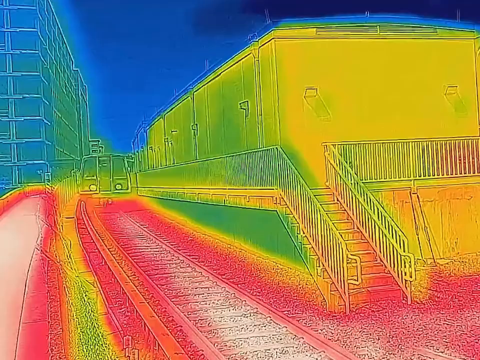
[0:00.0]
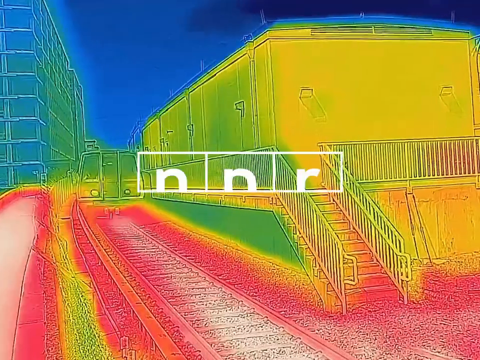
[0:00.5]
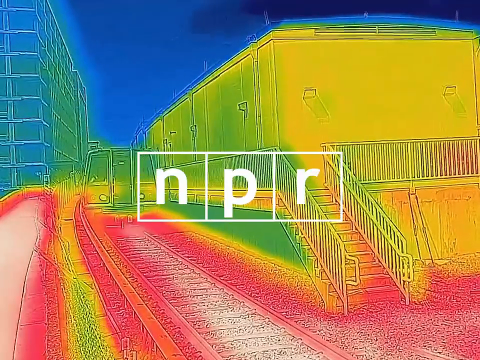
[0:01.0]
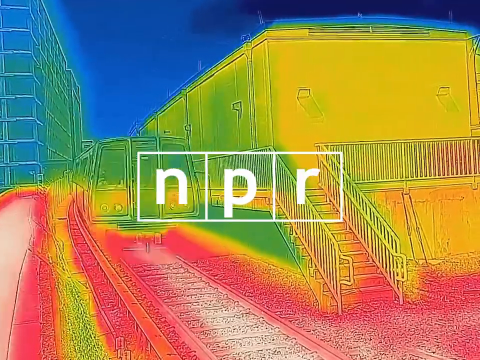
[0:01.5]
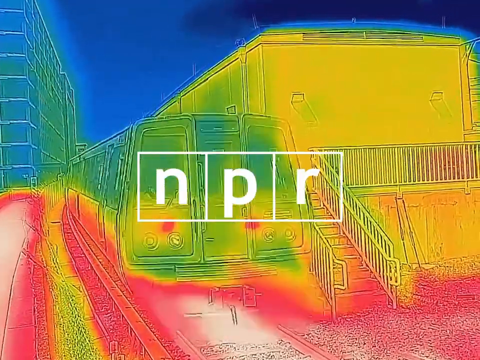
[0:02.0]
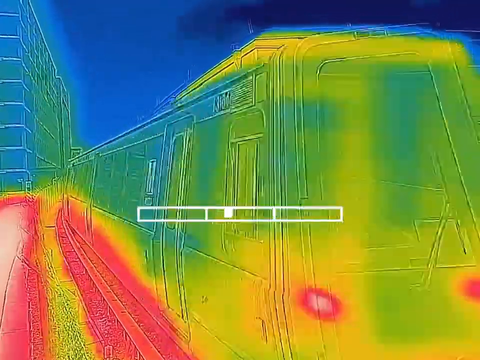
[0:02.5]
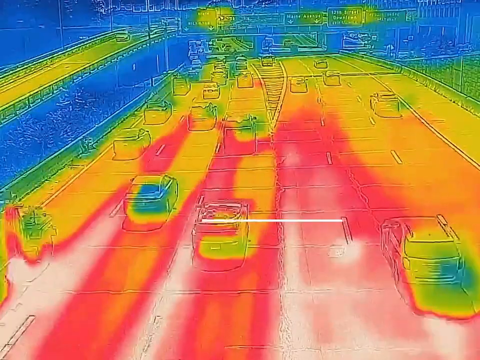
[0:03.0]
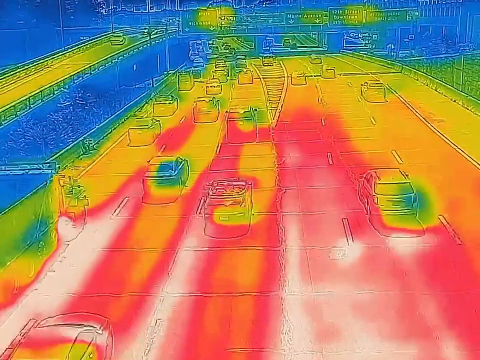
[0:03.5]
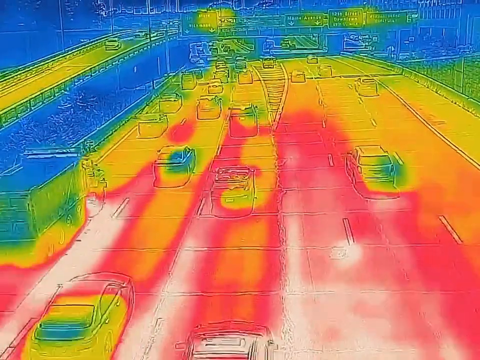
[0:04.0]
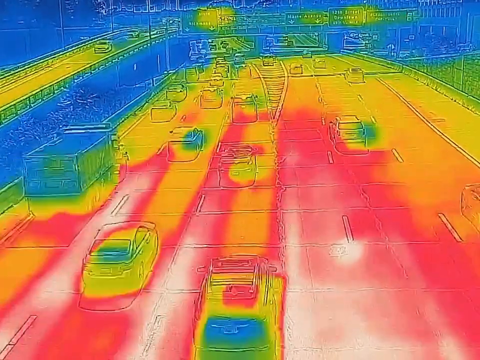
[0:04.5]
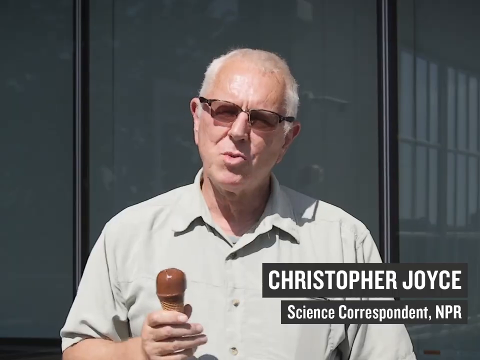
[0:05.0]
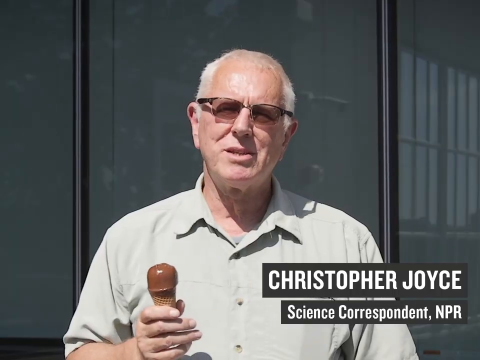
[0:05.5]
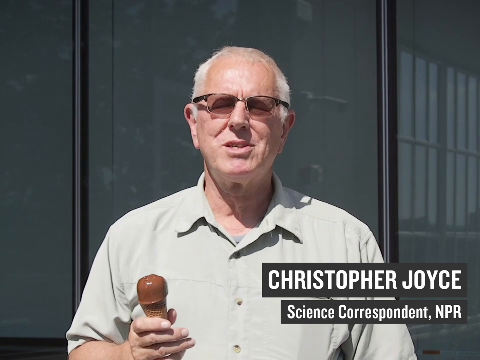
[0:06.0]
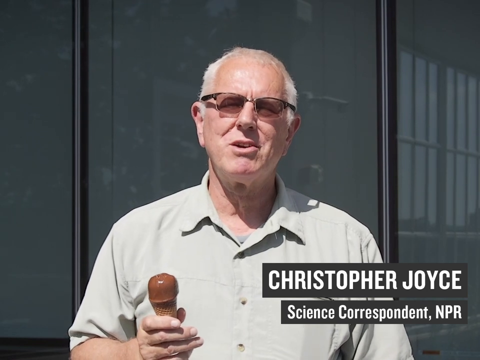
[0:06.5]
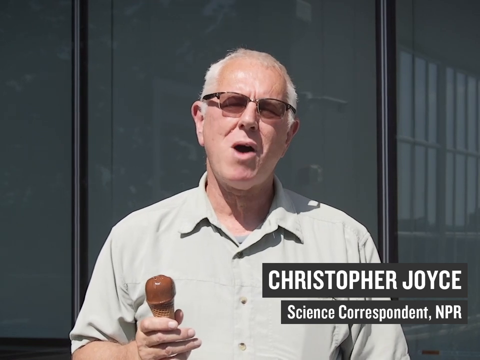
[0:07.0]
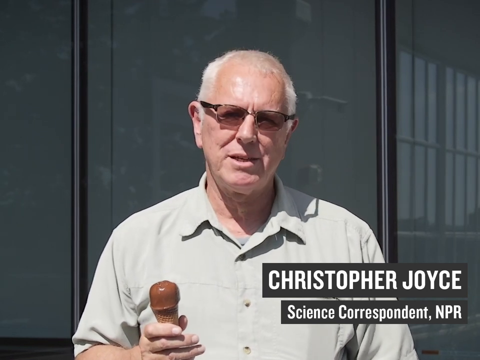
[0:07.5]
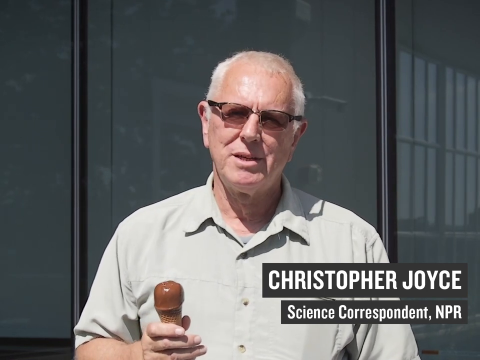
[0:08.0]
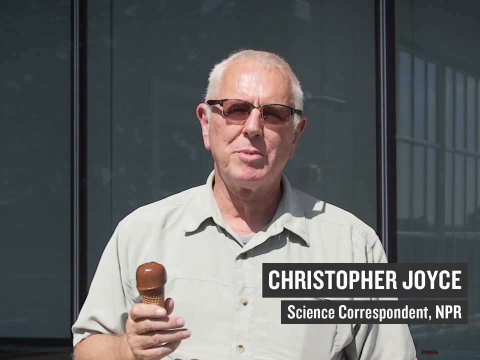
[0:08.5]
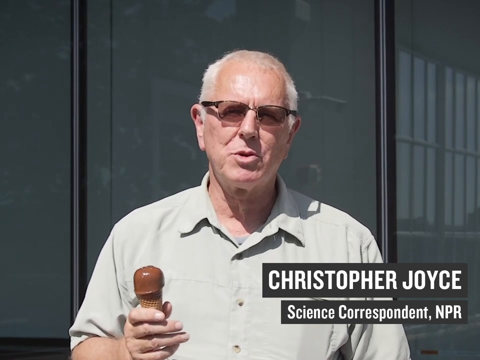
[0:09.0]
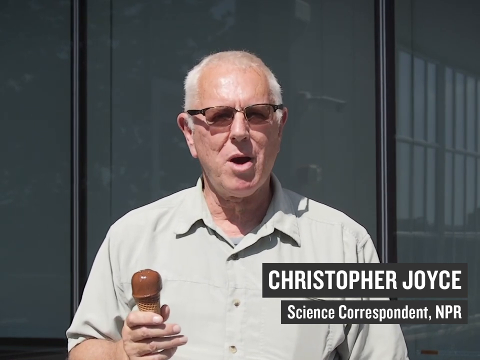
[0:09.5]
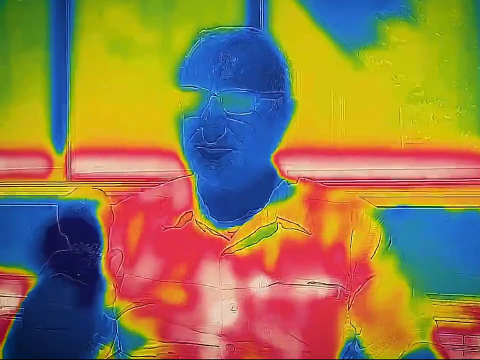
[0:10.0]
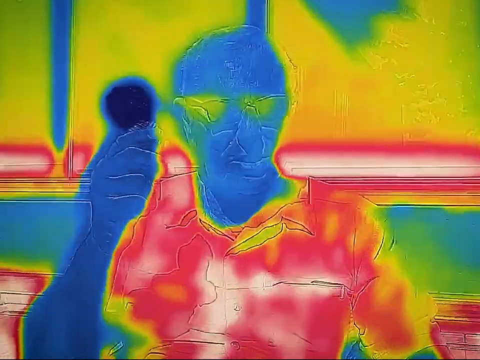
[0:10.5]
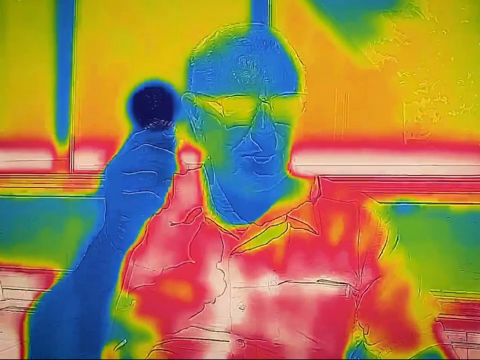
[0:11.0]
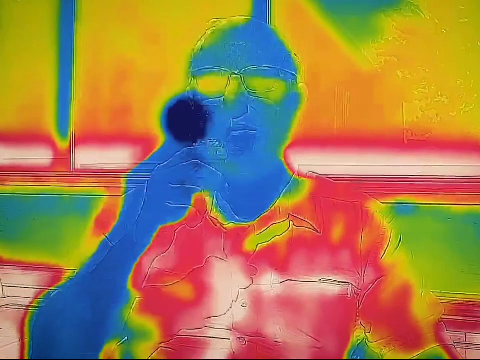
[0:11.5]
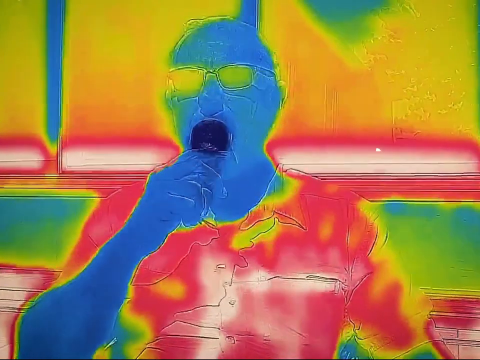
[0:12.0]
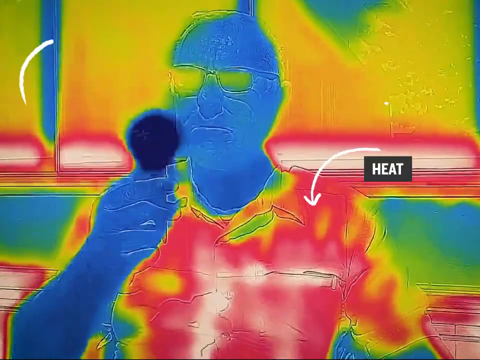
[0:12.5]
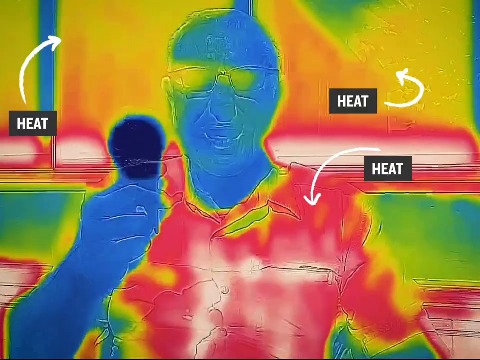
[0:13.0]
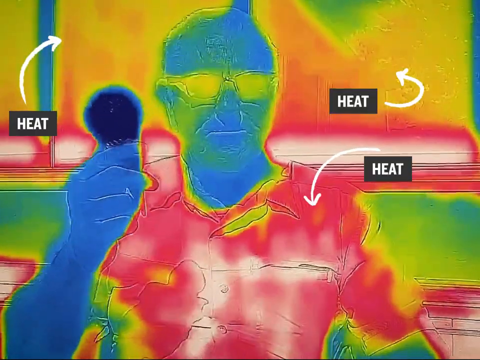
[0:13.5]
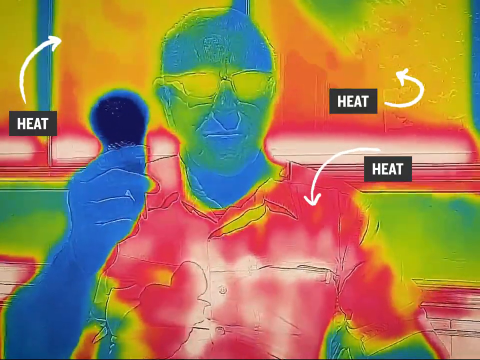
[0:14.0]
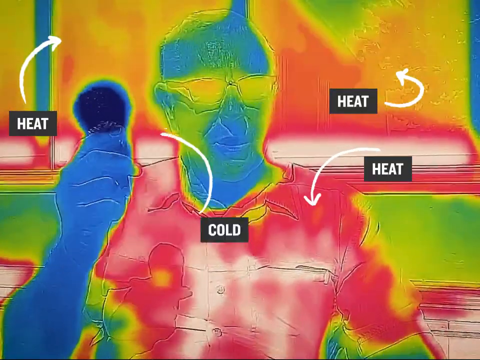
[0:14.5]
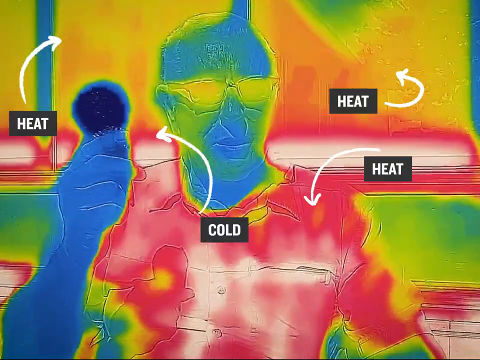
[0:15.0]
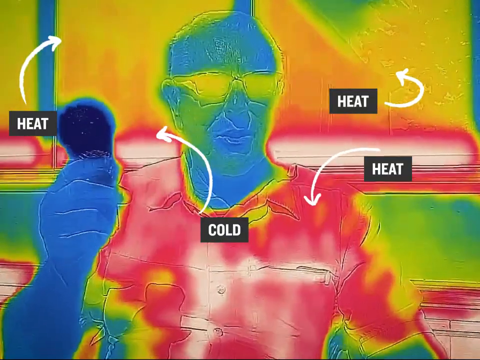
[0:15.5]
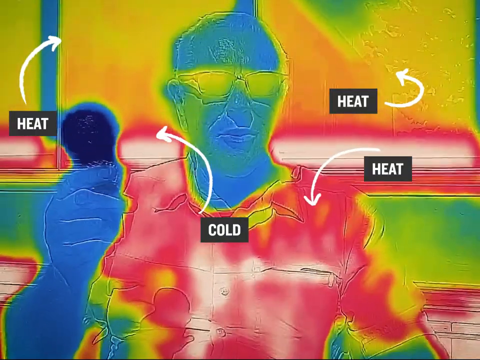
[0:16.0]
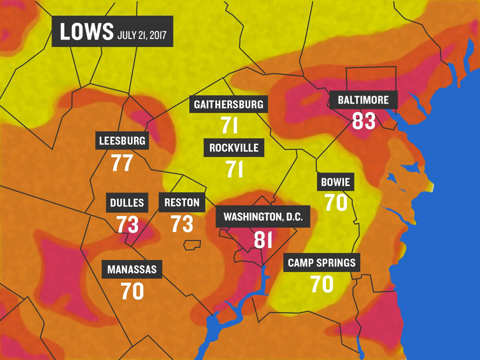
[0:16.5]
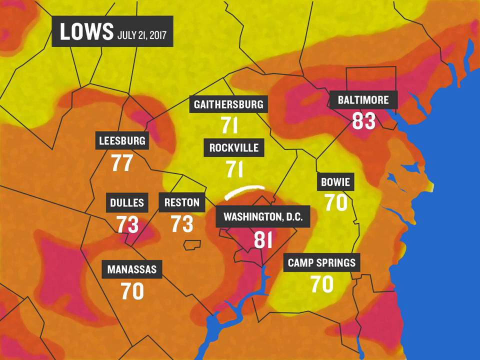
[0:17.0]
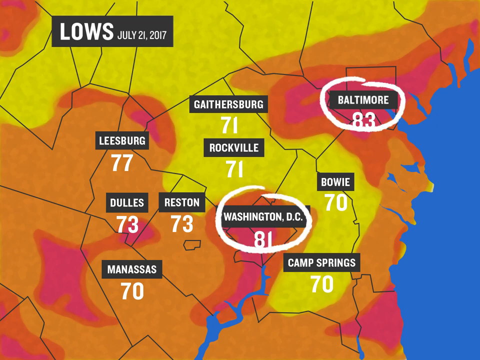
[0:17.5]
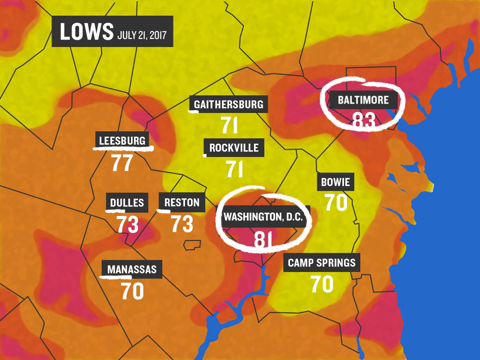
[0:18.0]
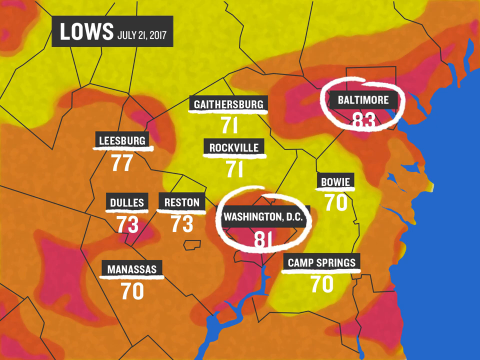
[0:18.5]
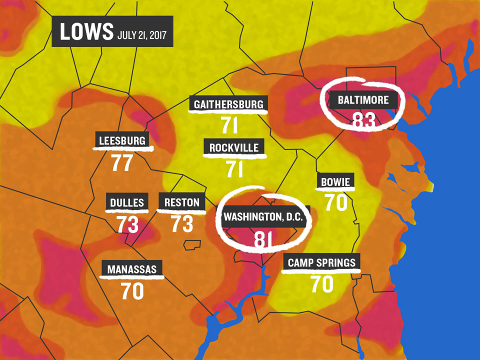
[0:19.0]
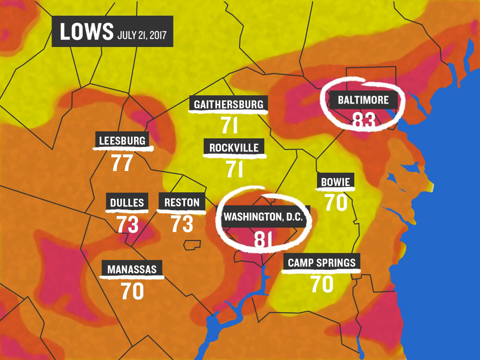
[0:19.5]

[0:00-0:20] The video opens with a heat map sort of effect on the lettering "NPR." The scene switches to what looks like a highway, still with the heat map effect on top, where about a dozen cars drive along. The scene switches again to a man named Christopher Joyce, who appears to be a science correspondent with NPR, judging by the banner at the bottom. He is a Caucasian man, maybe about 60 to 65 years old, with white hair, sunglasses and a green shirt, and he appears to be holding an ice cream cone with a chocolate cover. The scene then shows him with the heat map effect as he licks the ice cream cone, and a few arrows point out the heat around him and how the ice cream is cold. Next, a map of the United States appears, with Washington, D.C., and Baltimore circled.